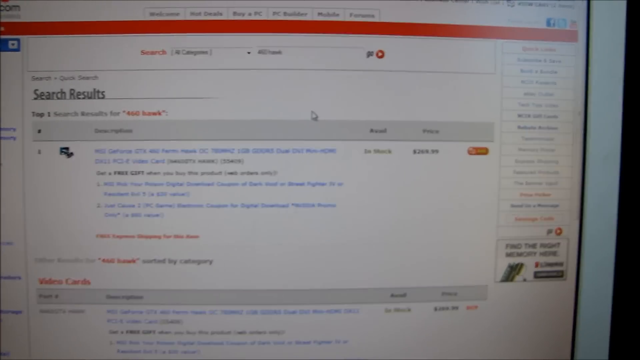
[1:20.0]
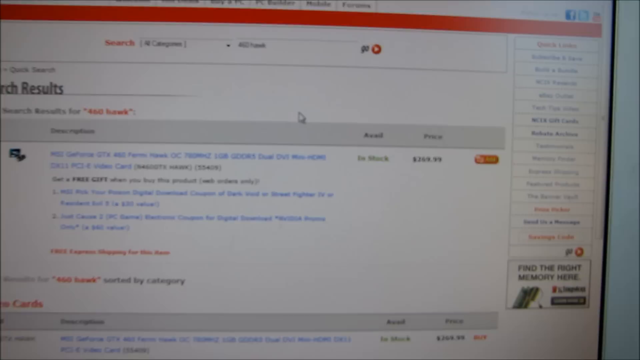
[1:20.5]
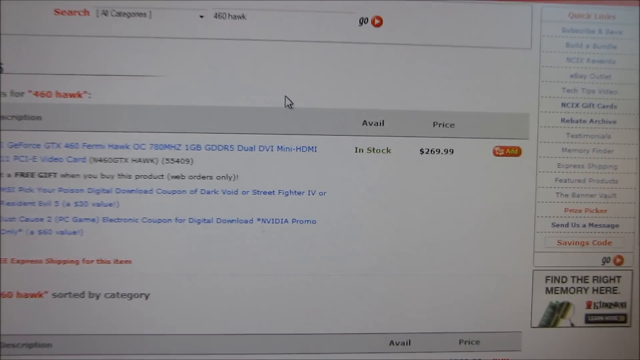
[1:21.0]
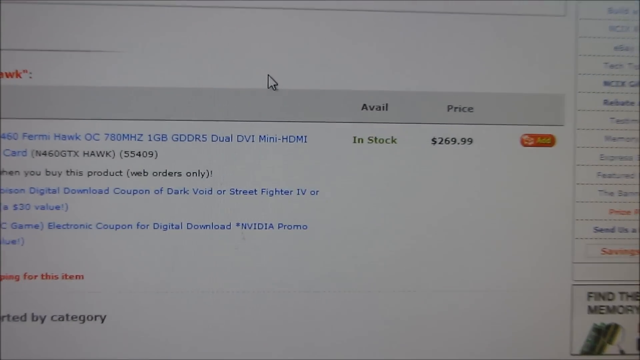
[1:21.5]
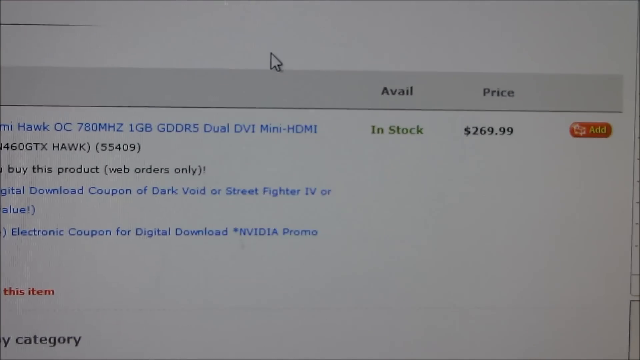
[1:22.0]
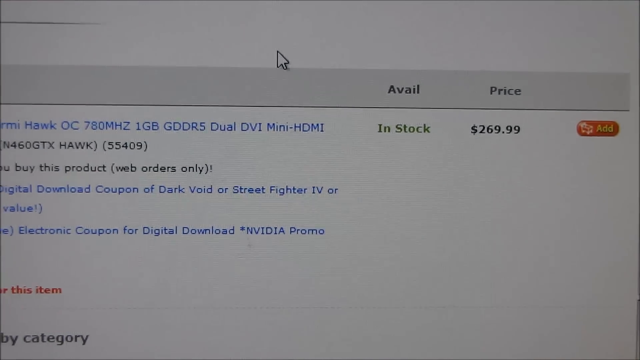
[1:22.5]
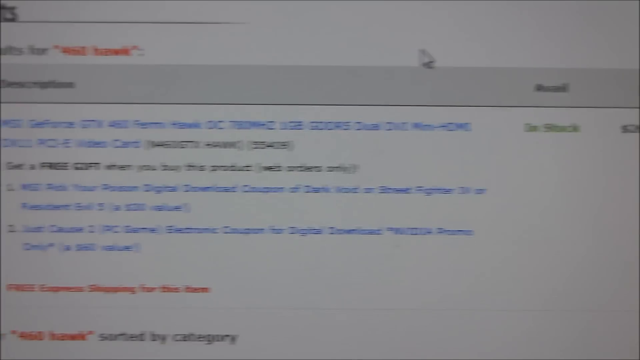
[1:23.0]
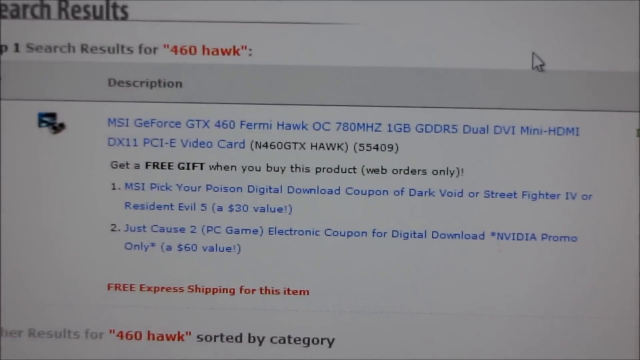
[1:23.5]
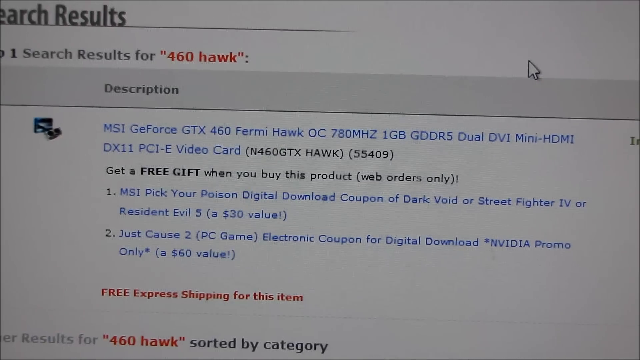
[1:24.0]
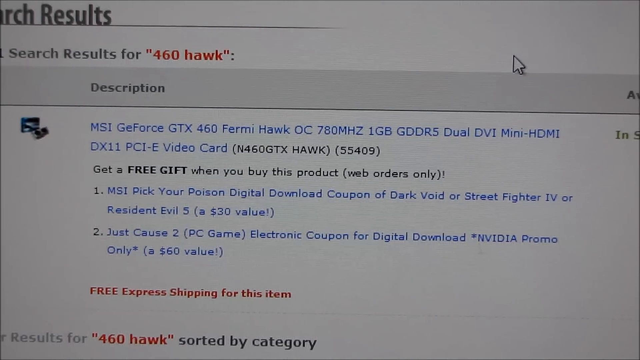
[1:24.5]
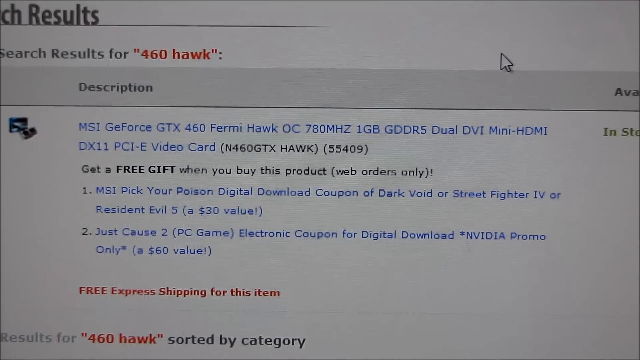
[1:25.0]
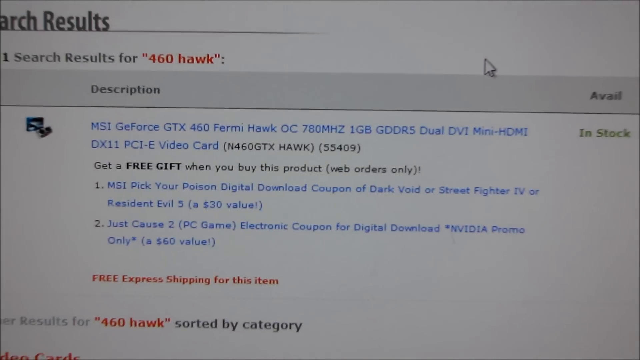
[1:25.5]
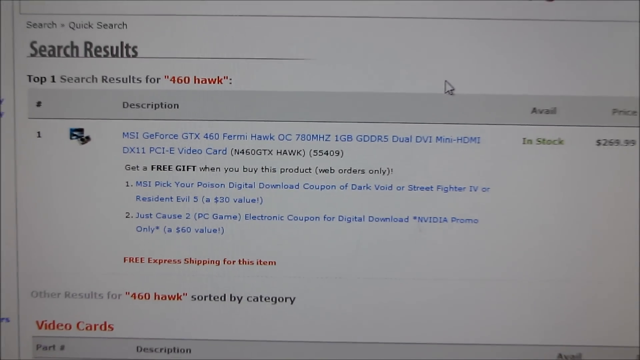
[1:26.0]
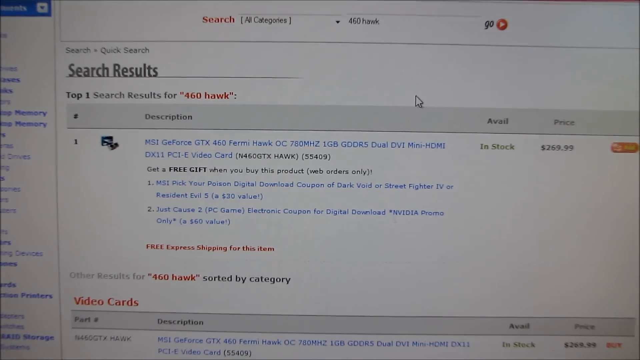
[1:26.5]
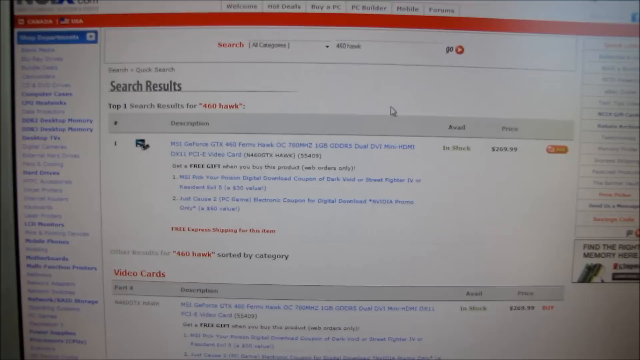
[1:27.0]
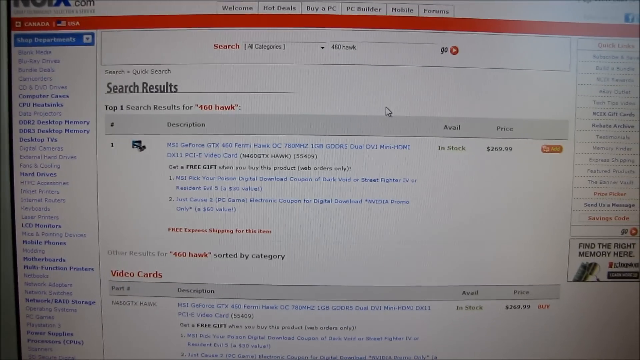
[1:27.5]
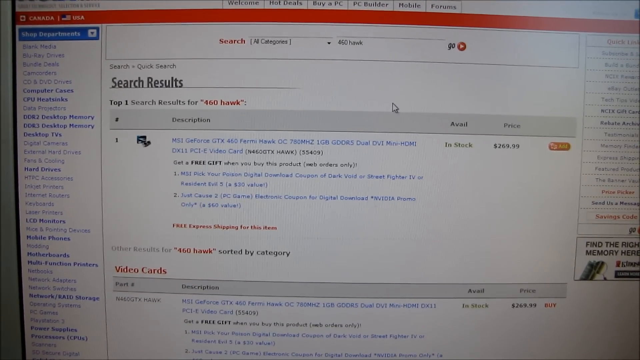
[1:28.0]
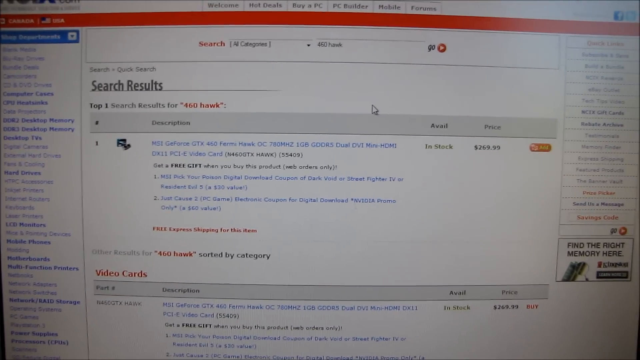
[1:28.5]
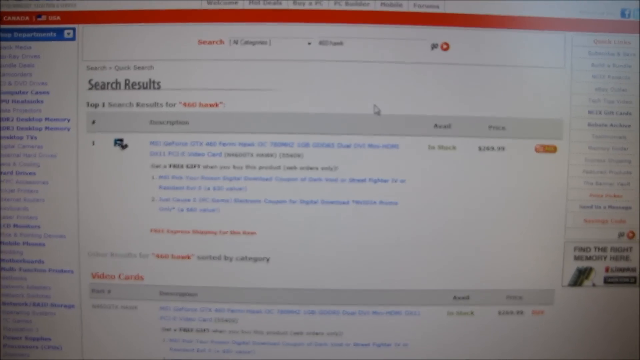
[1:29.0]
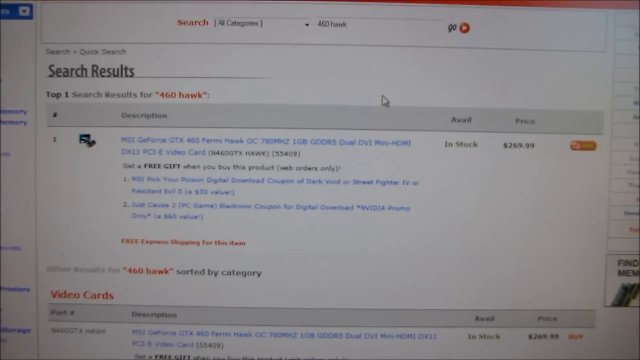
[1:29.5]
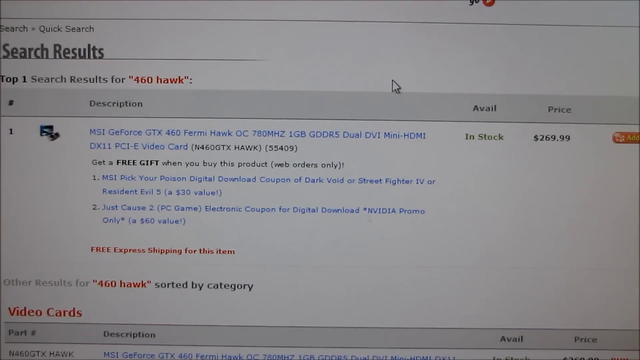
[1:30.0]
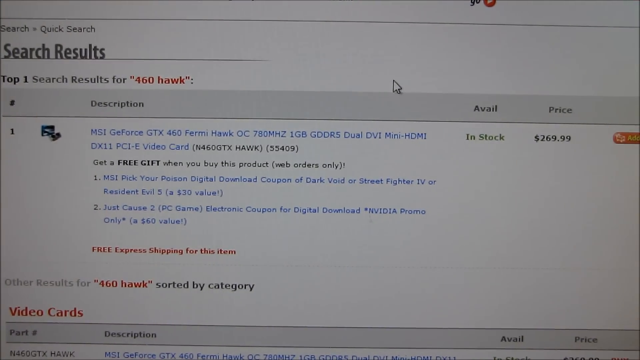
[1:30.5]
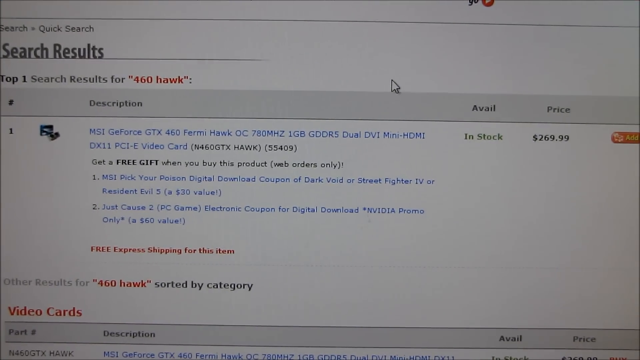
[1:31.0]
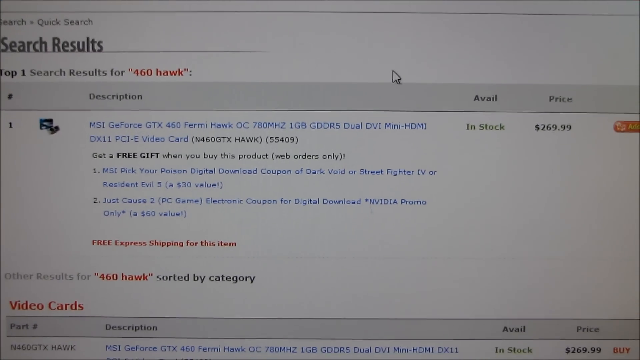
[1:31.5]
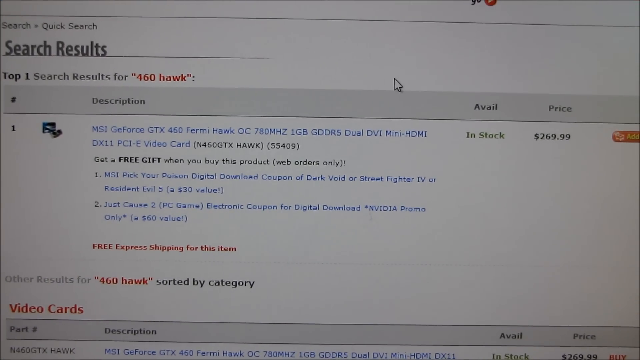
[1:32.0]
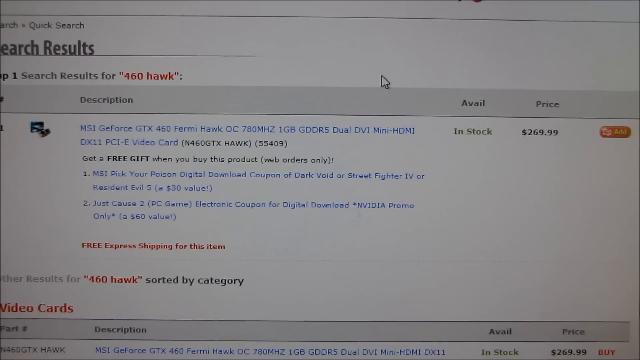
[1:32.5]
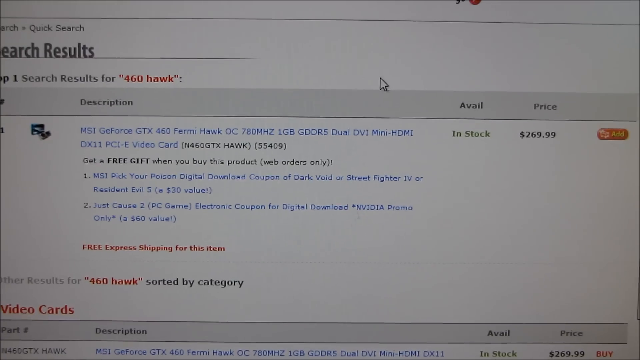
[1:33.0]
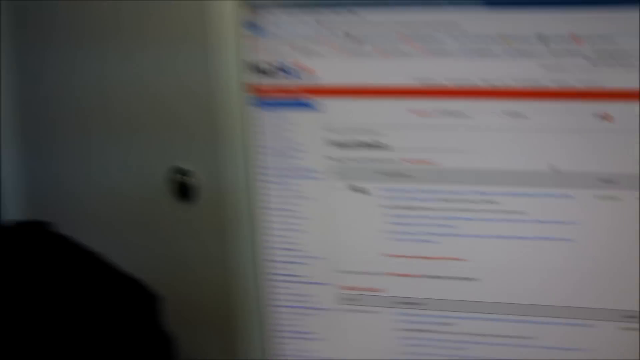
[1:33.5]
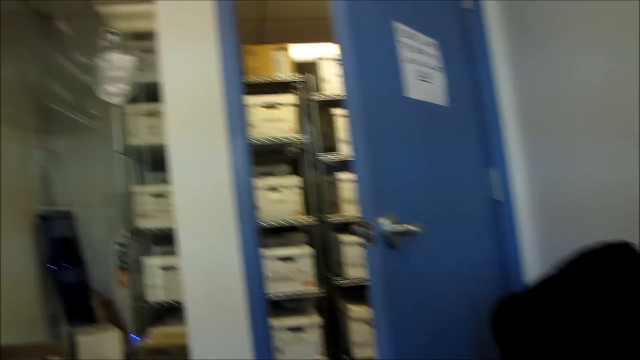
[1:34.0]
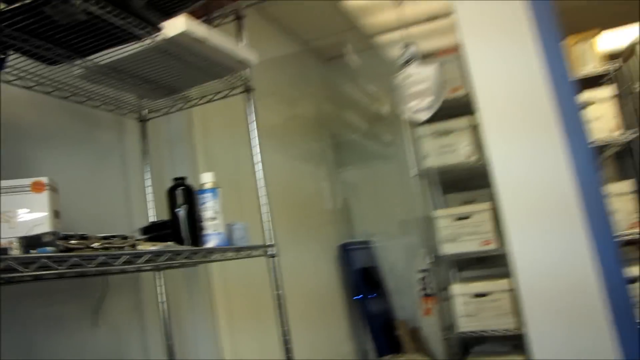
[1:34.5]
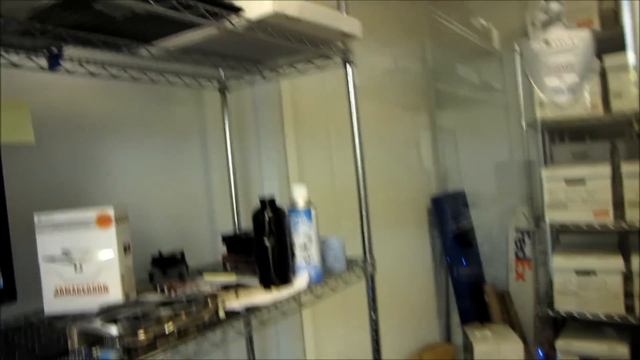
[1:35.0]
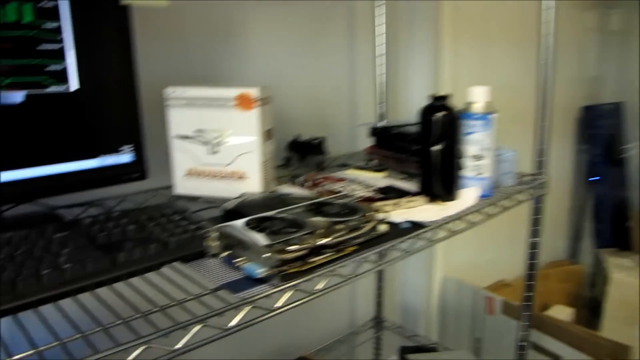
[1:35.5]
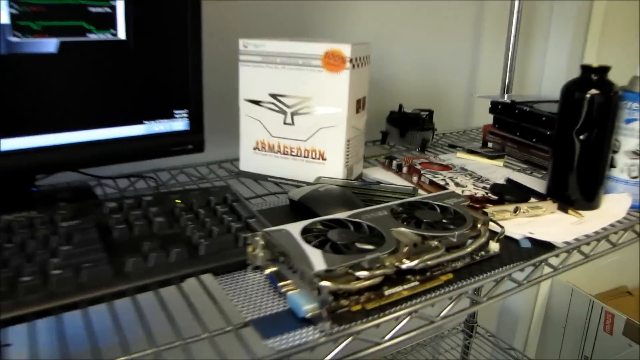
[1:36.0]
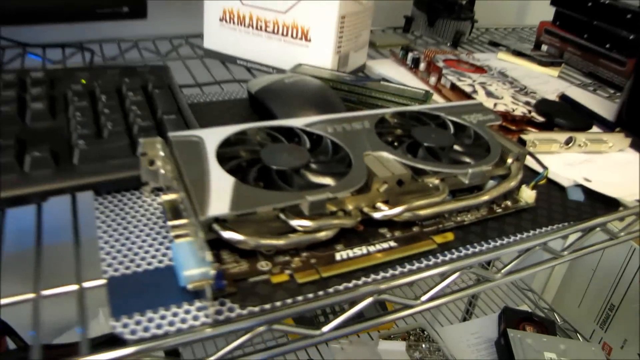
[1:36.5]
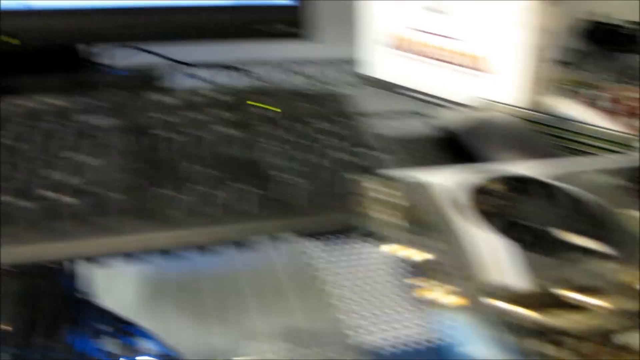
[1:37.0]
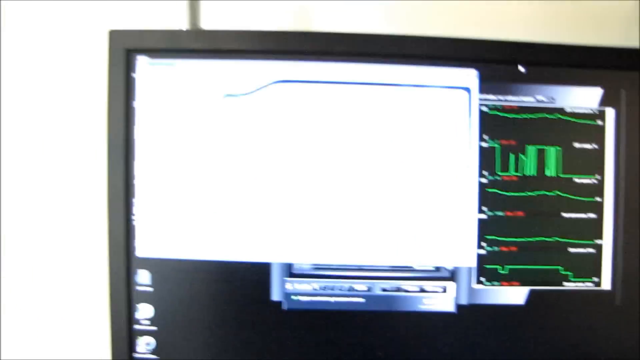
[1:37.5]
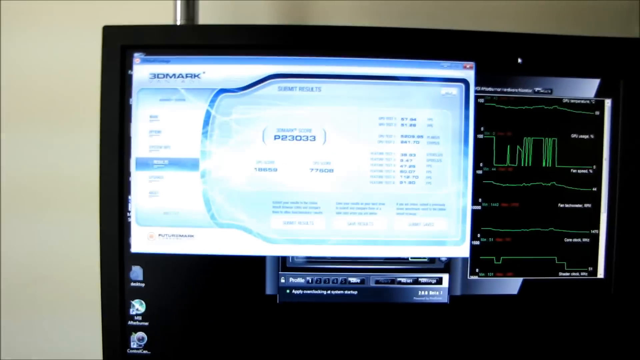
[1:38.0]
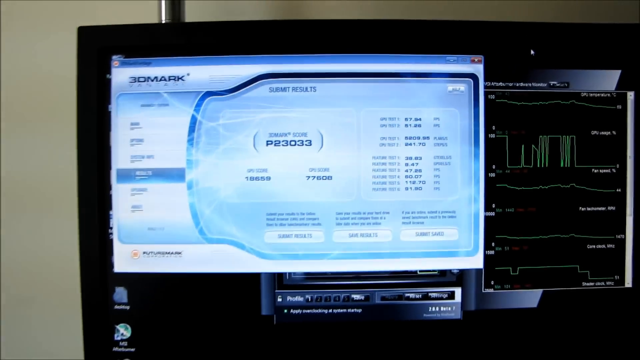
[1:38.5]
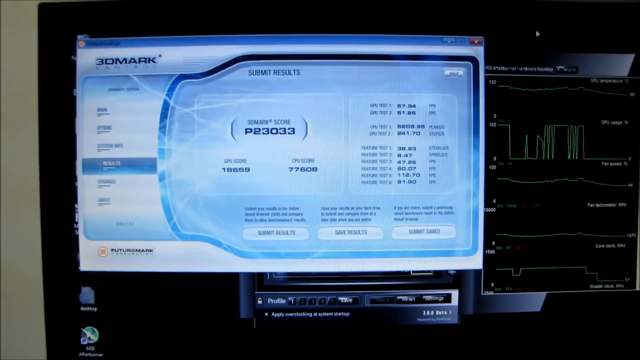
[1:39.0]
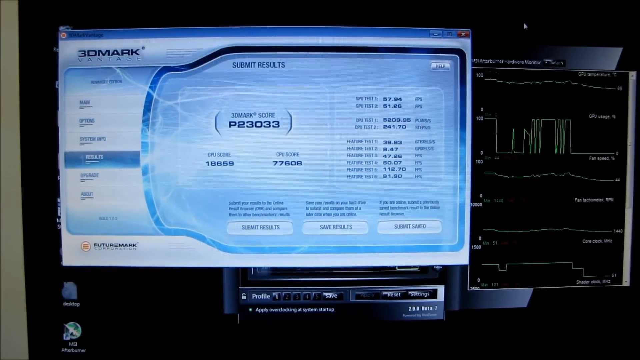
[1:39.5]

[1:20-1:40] The camera is on a computer showing search results for something that says "460 Hawk", listed as available in stock with a price of "269.99", and it zooms in on this part. The camera then pans away from the computer, turning around to what is behind, where there is a metal shelf with some sort of computer part on it. It goes back to the first computer, not the one with the search results, which is on the metal shelf with the small component, and zooms in on its screen briefly, which shows "Joe Mark" something, before cutting off.